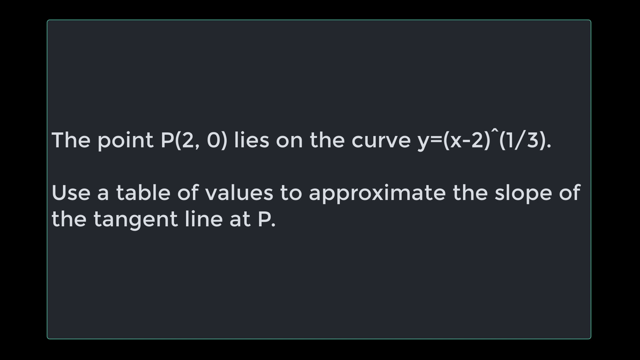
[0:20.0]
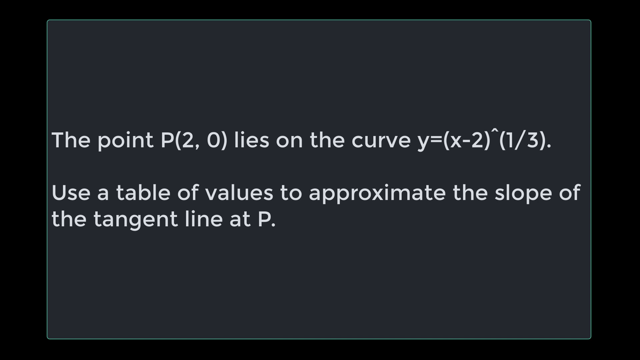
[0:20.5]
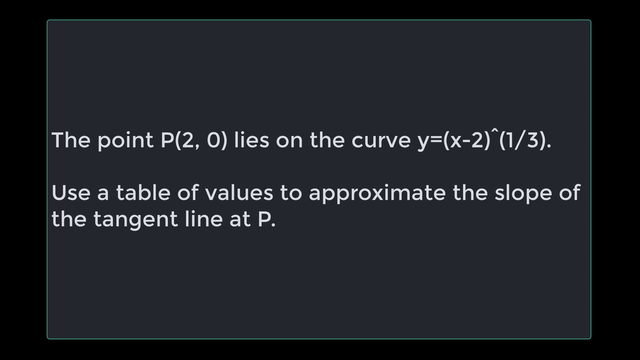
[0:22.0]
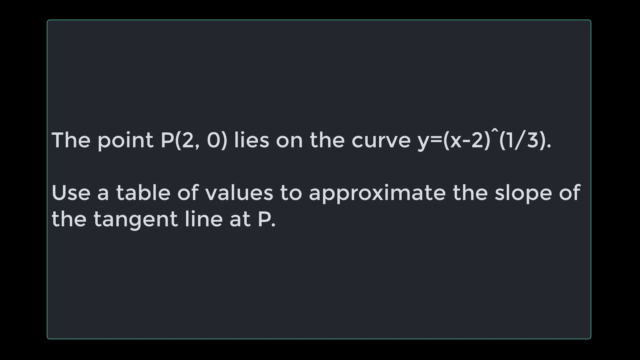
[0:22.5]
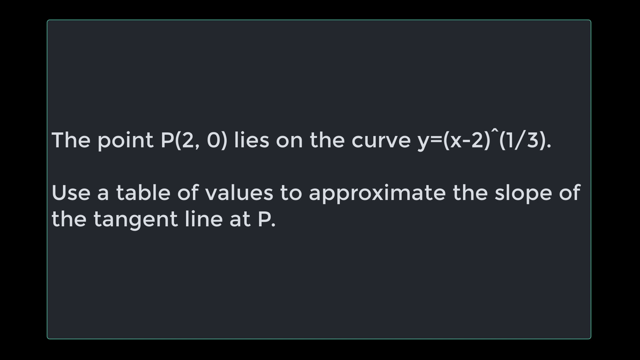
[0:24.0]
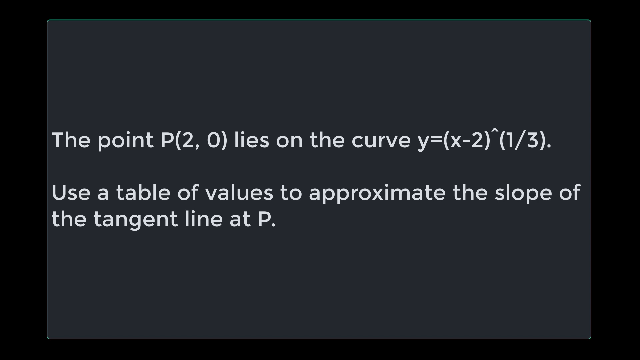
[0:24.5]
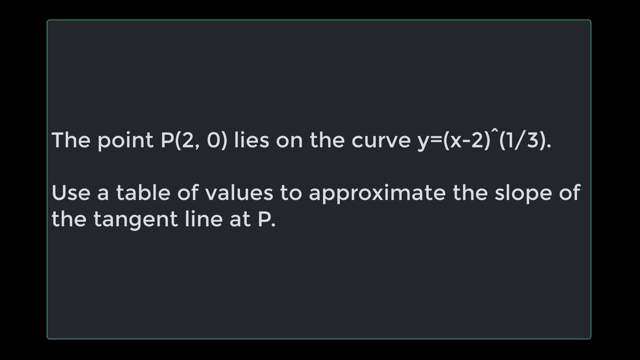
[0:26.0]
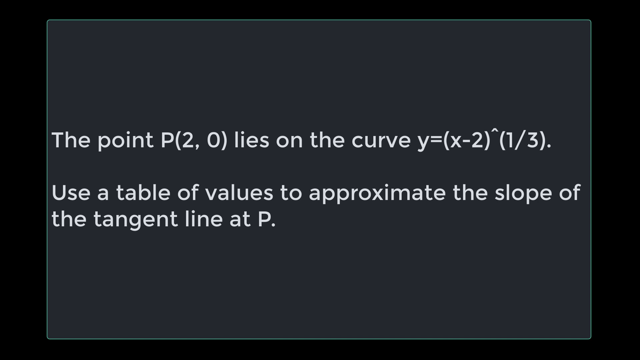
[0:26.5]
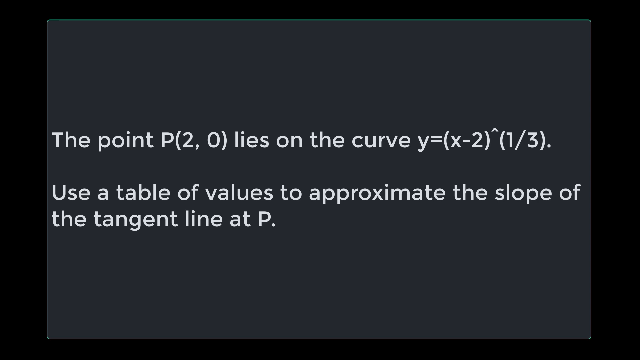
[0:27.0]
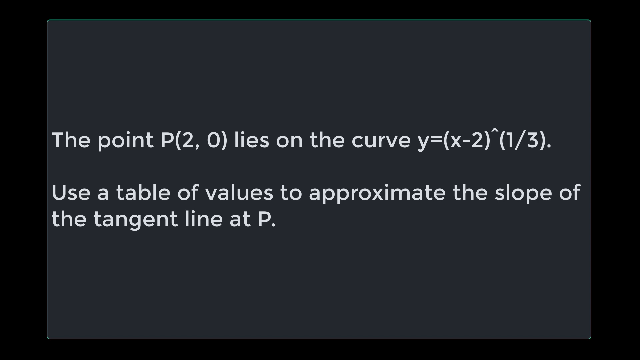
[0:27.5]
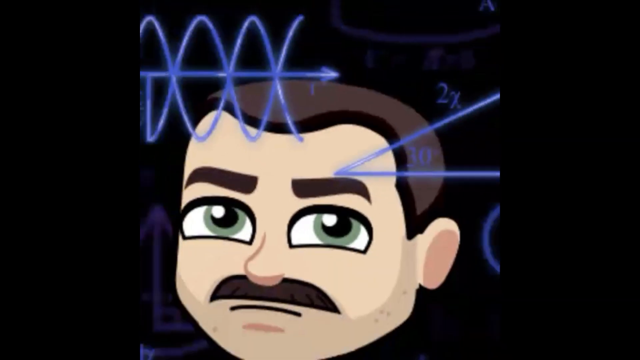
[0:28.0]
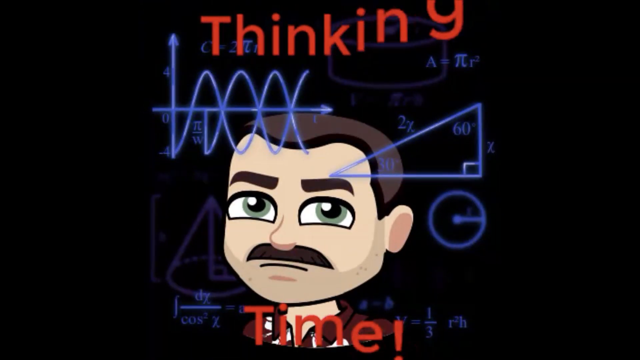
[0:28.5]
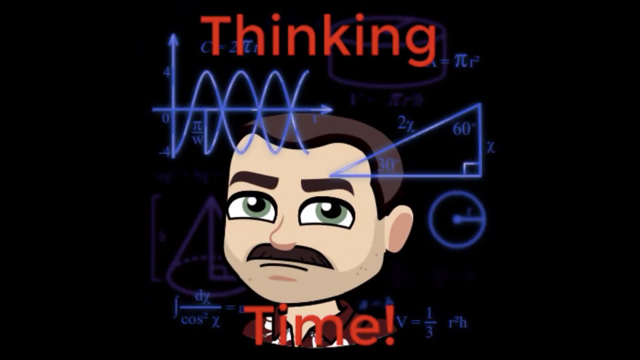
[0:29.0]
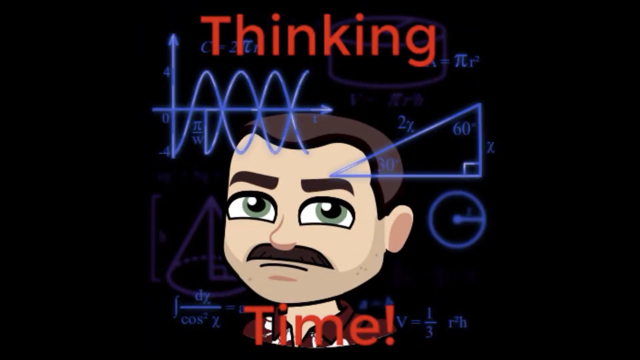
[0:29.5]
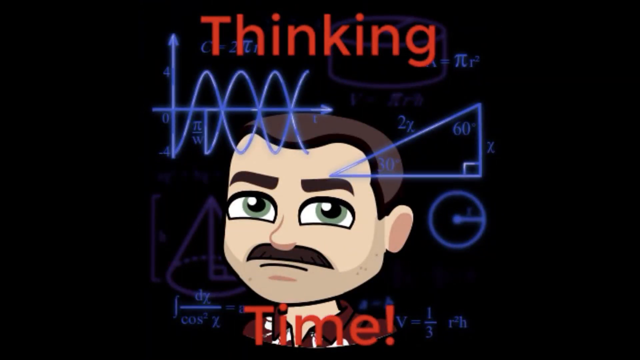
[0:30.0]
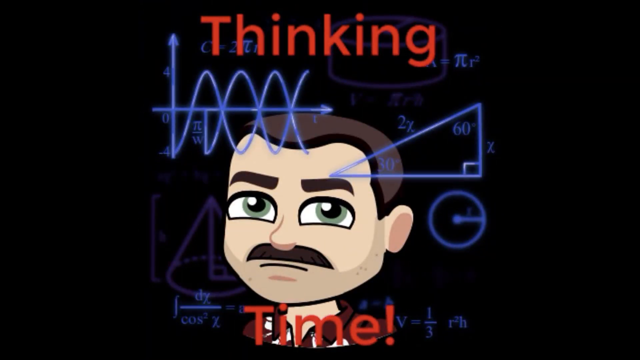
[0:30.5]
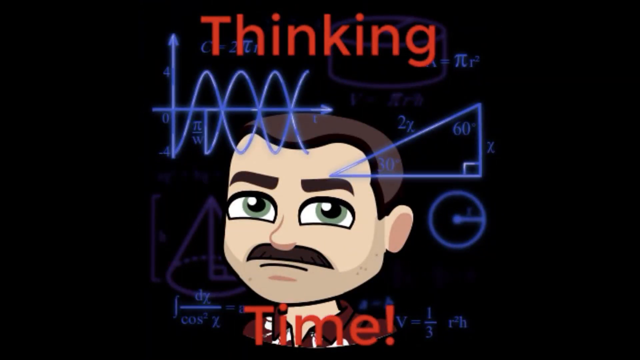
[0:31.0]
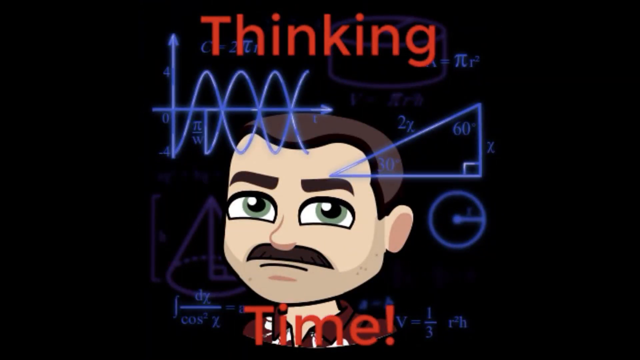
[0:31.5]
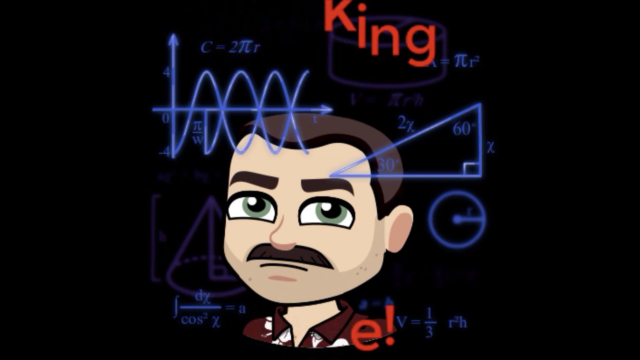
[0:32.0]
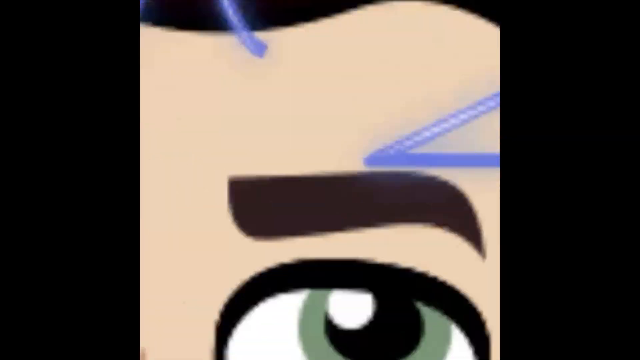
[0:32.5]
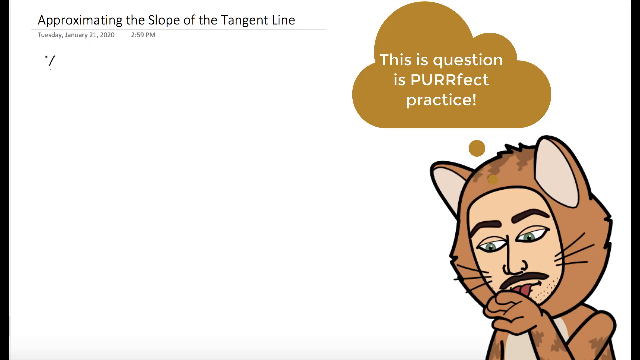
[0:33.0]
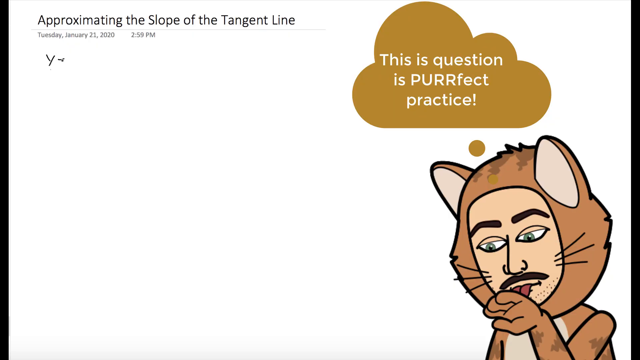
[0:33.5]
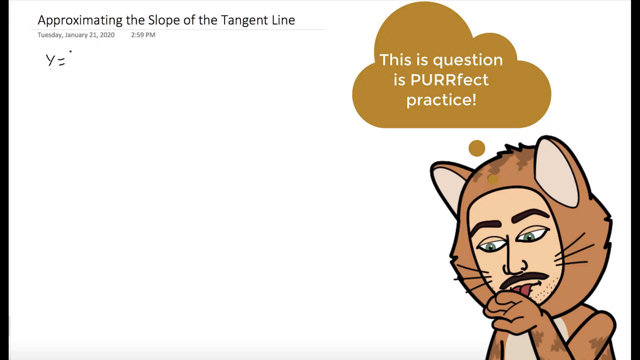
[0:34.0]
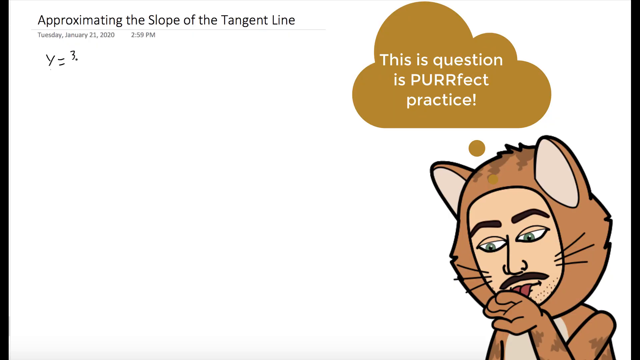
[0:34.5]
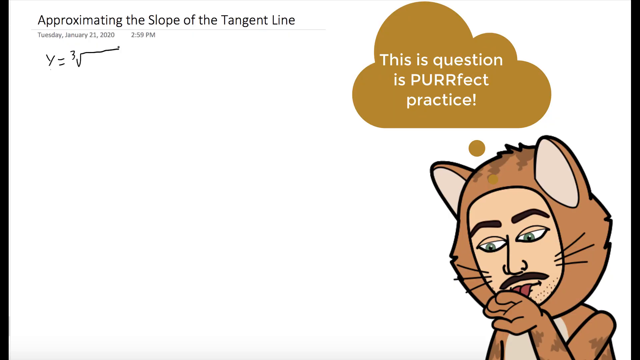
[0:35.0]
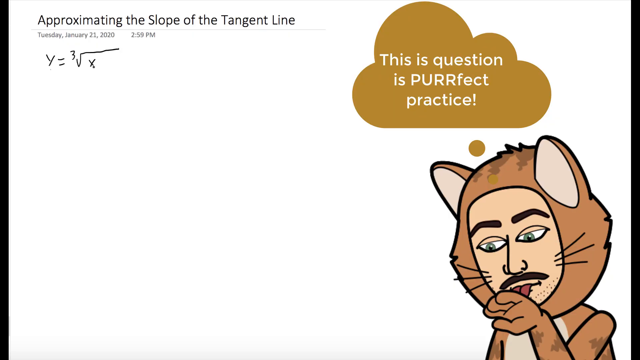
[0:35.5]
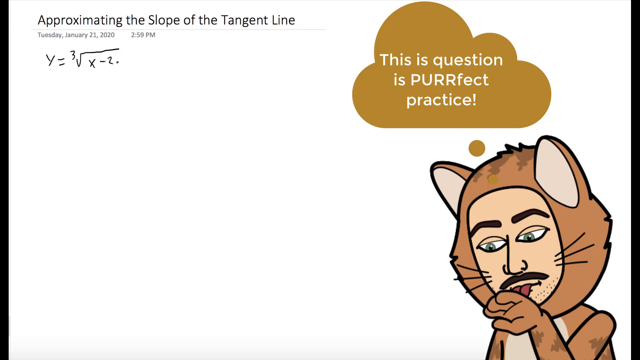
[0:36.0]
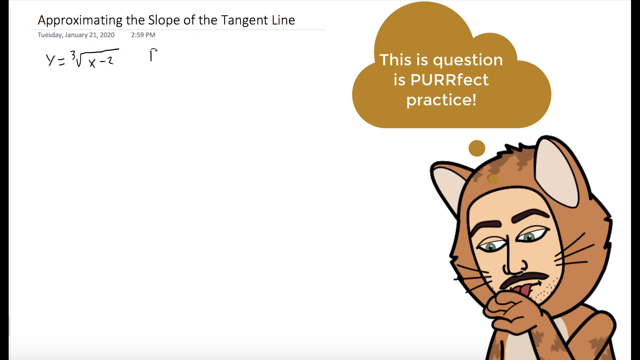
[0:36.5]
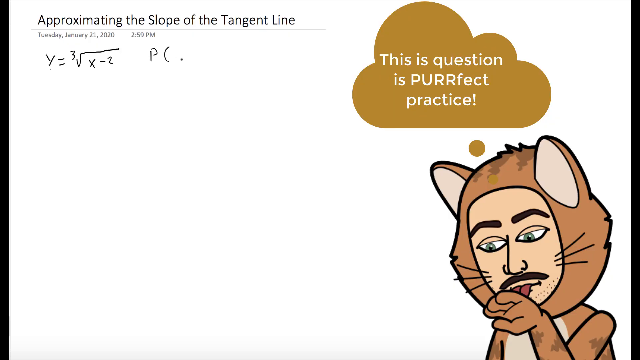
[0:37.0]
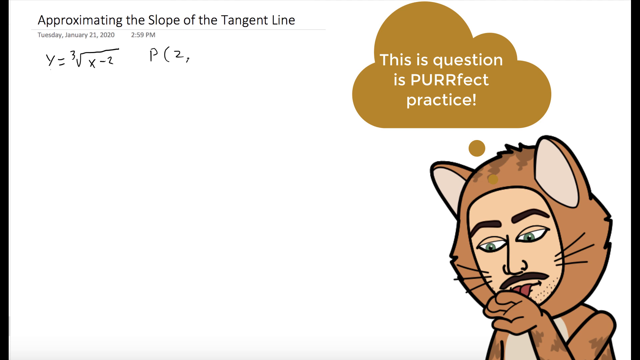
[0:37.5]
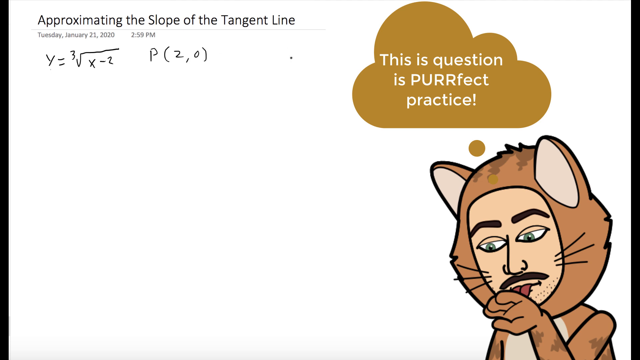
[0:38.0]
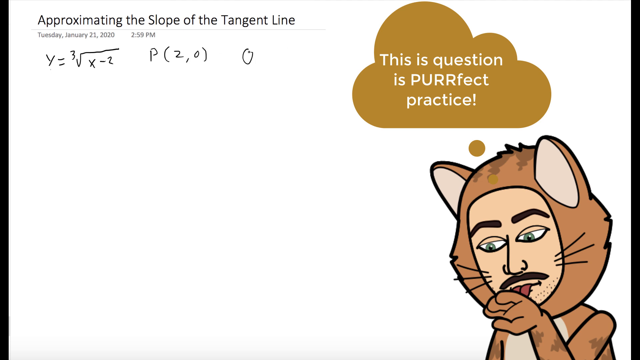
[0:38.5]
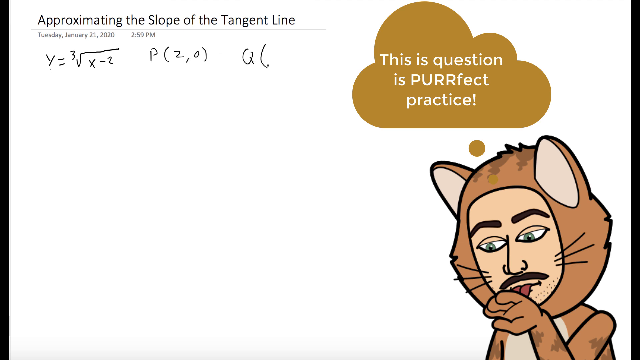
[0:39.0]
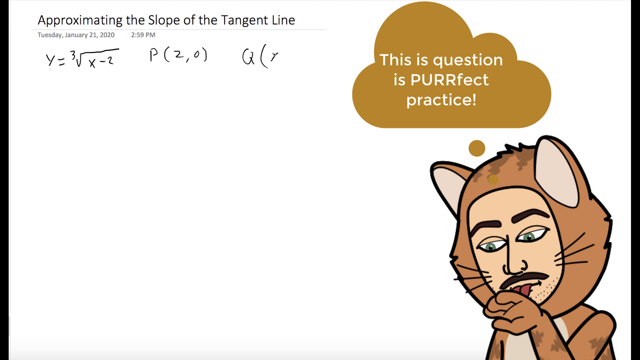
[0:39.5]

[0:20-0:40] The screen shows the text about the point P (2, 0) lying on the curve y = and the rest of that phrase. A cartoon character comes from the front, really large, and comes into focus as he moves to the back. The word "thinking" is at the top, along with a straight line that has multiple lines going around it and an arrow pointing up. There is a face of a man with green eyes and brown hair, frowning. On the next line a cursor is toward the top left, with the words "approximating the slope of the tangent line" and "Tuesday, January 23, 2003." It shows "y = 3", with a g with a line over it below that, and "(x - 2)" written under that line. This is the second column at the top. To the right of the head is a cartoon lion with a bubble above its head reading "this question is perfect practice." The lion appears to have its tongue out, with its tongue on its left paw.